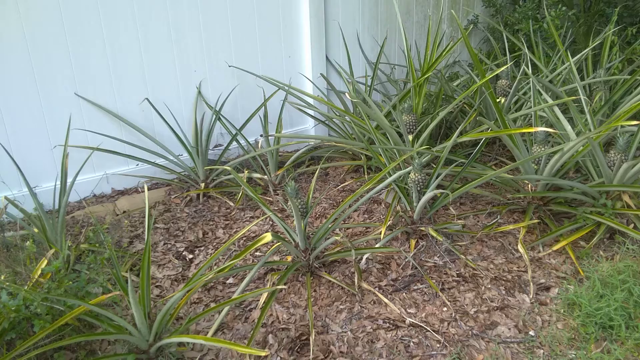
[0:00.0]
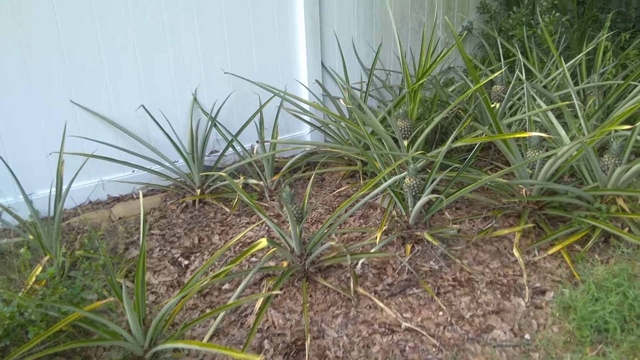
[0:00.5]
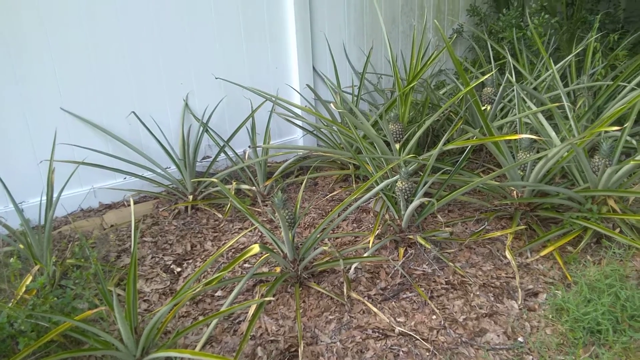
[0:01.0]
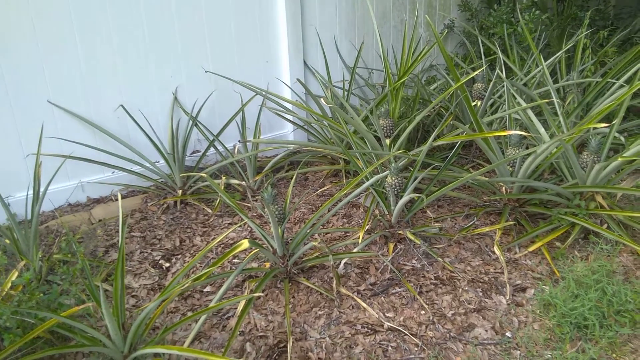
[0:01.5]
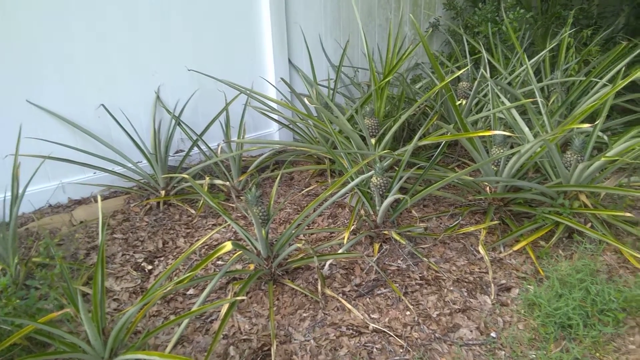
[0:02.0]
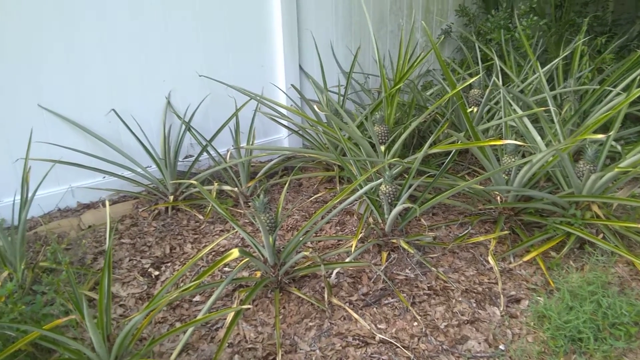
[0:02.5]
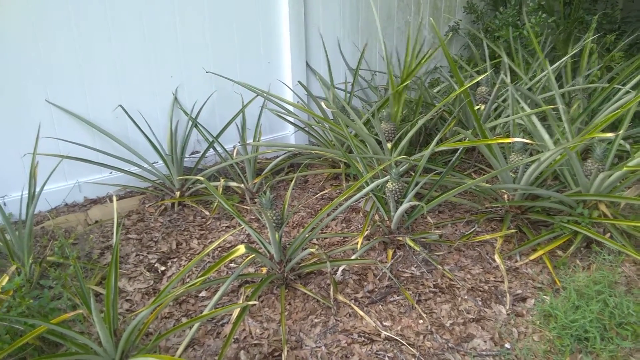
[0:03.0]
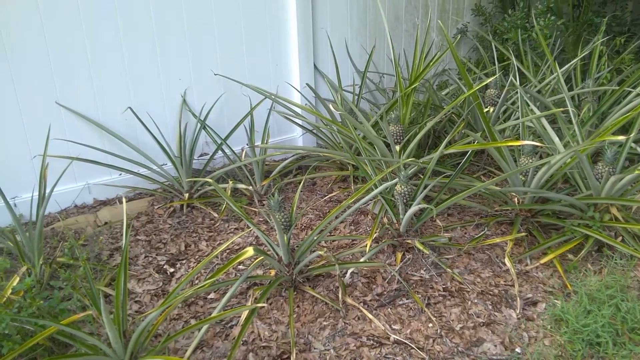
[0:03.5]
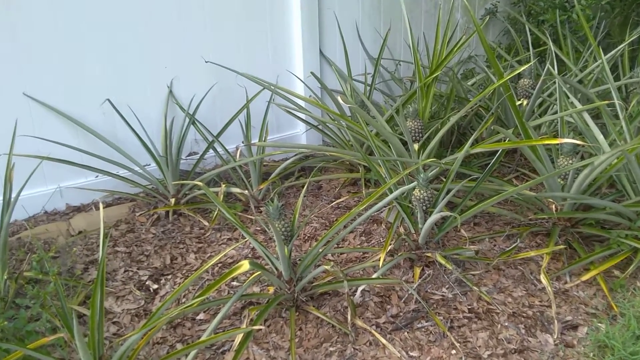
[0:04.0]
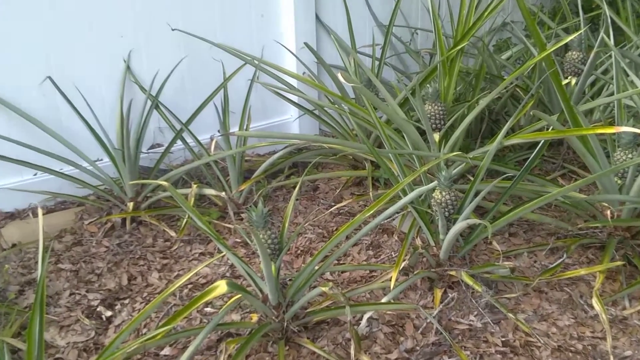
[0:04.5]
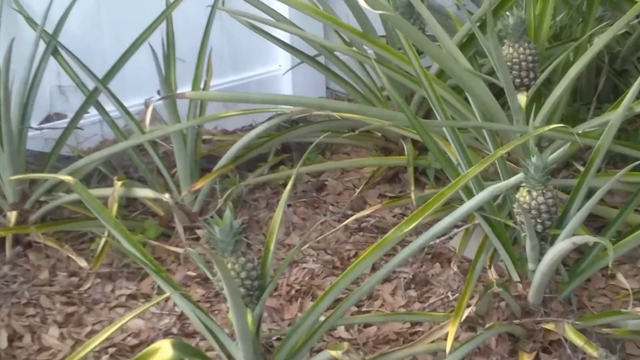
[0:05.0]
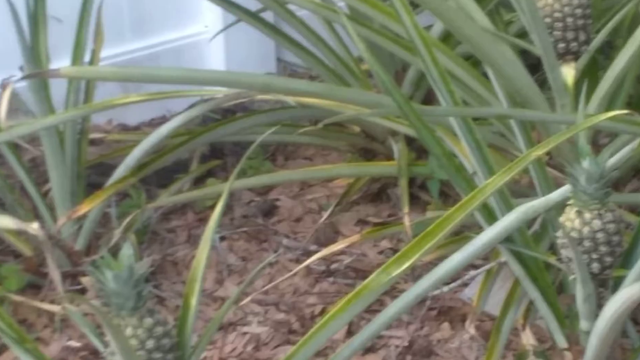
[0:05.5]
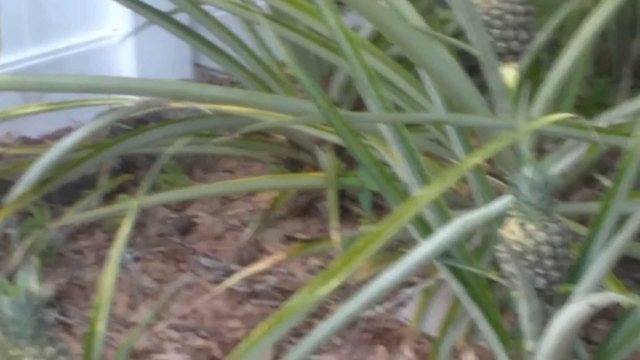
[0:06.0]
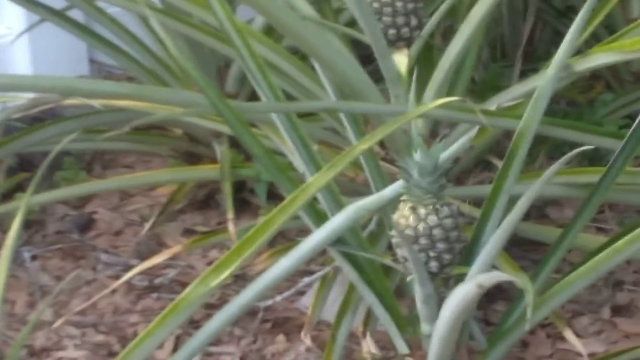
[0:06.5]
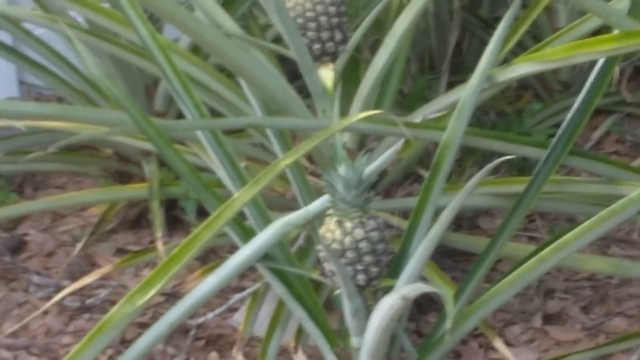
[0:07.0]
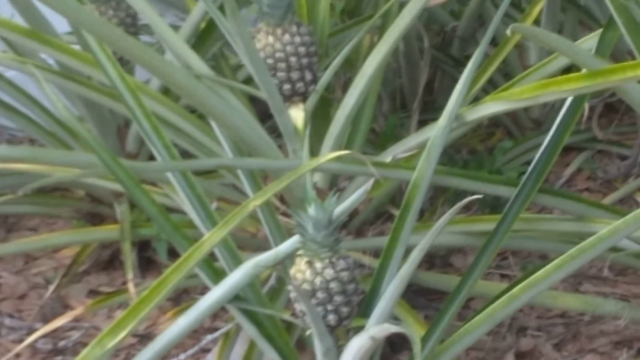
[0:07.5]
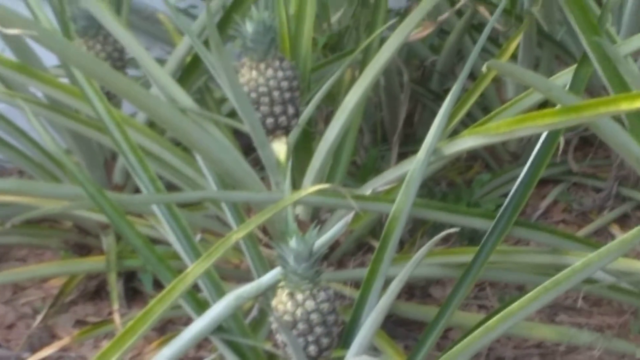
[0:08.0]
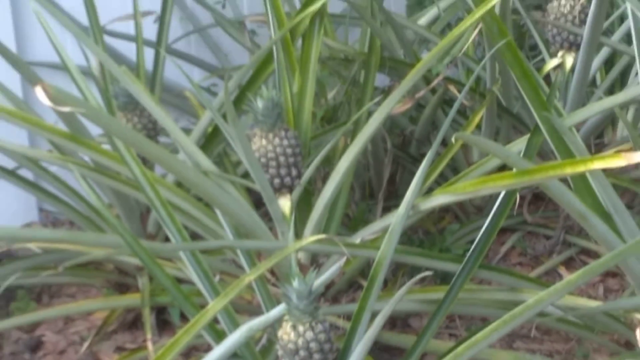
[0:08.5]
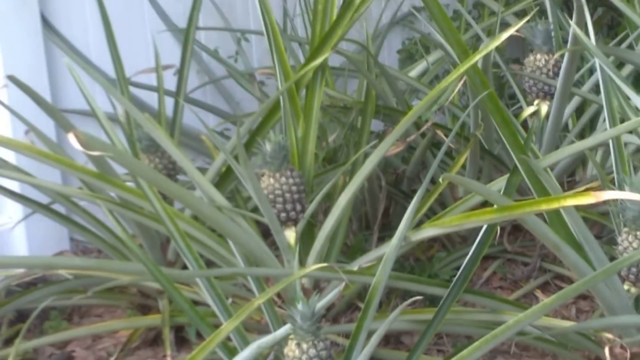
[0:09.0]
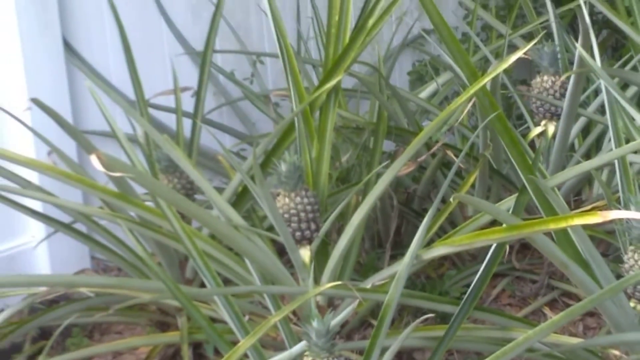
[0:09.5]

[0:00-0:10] A close-up shot shows some young green plants with spiky leaves against a white fence, in an area that looks like it might be residential. A little patch of grass appears in the bottom right corner of the screen, and brown mulch covers the ground underneath the plant. The video zooms in, revealing what looks like tiny little pineapples in the center of the spiky plants. Most of the leaves are dark green, but a few have yellow on the inside and are somewhat wilted, looking like they might be dying. The video then zooms out a tiny bit.